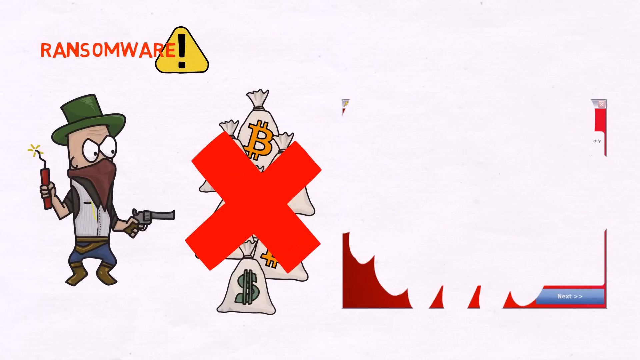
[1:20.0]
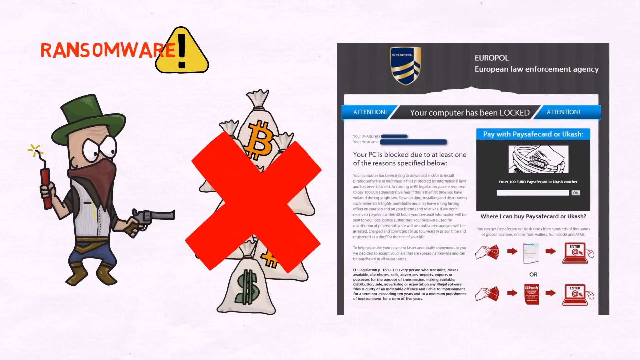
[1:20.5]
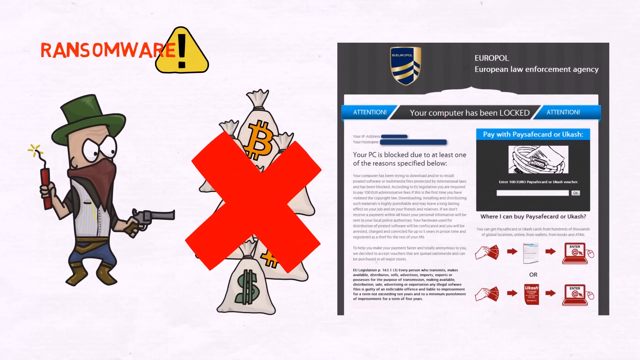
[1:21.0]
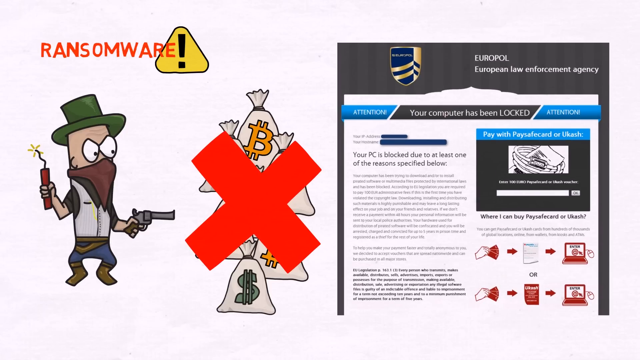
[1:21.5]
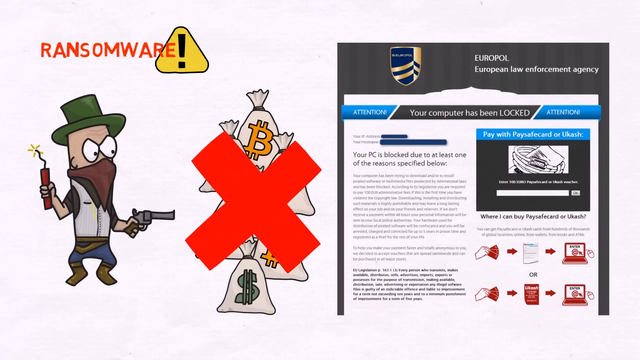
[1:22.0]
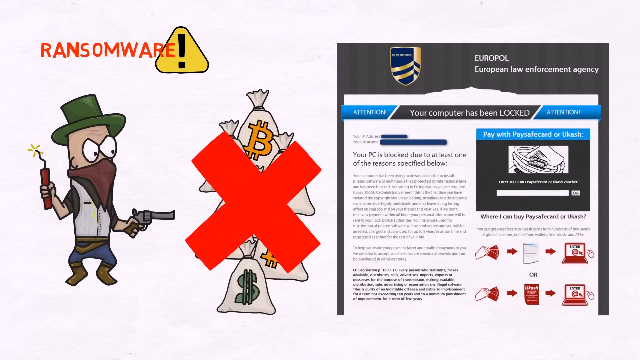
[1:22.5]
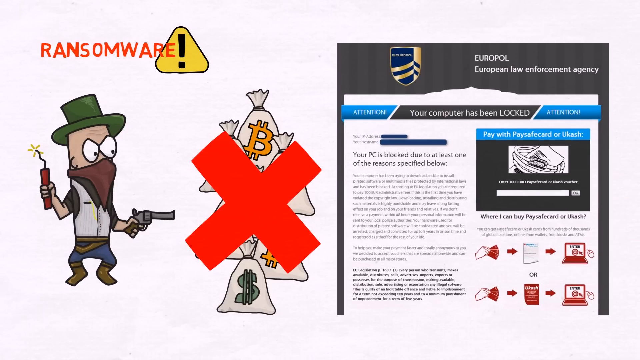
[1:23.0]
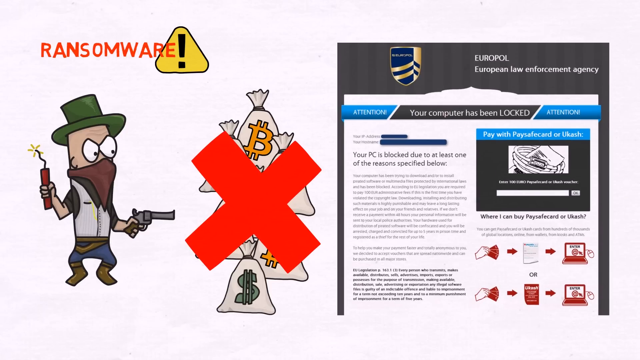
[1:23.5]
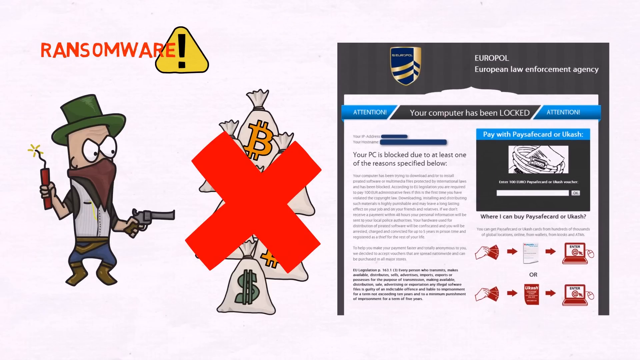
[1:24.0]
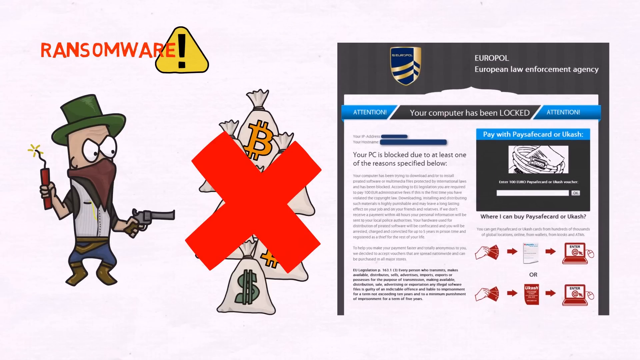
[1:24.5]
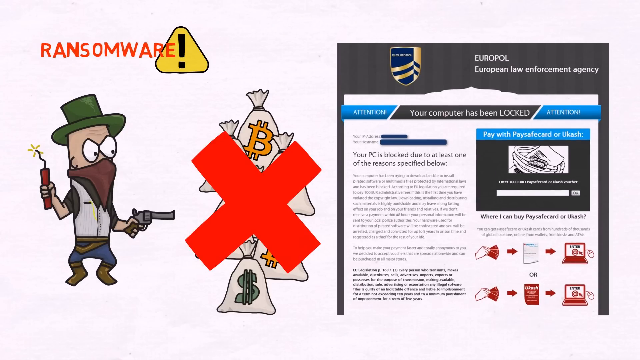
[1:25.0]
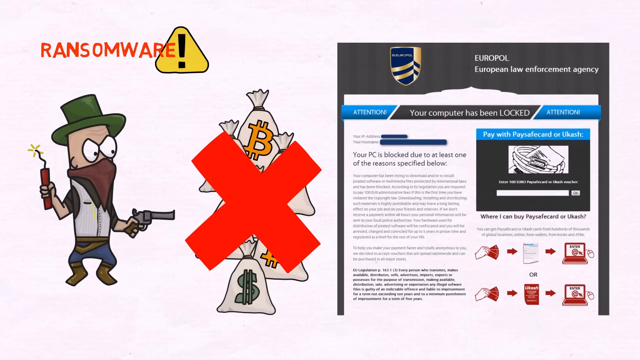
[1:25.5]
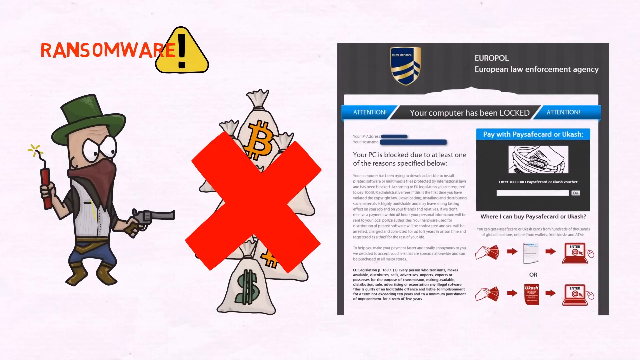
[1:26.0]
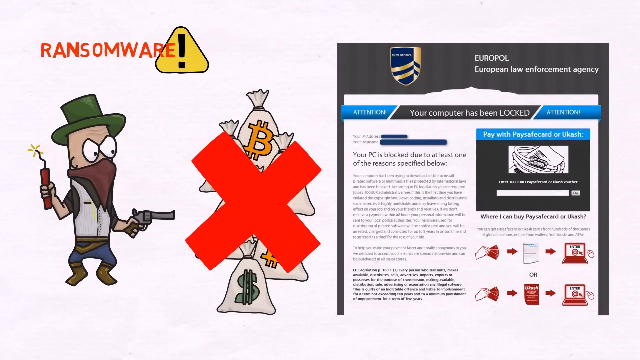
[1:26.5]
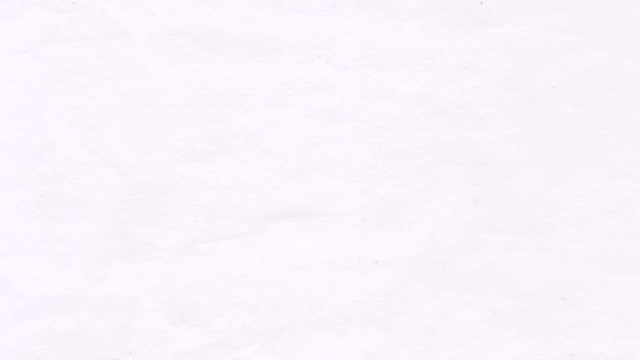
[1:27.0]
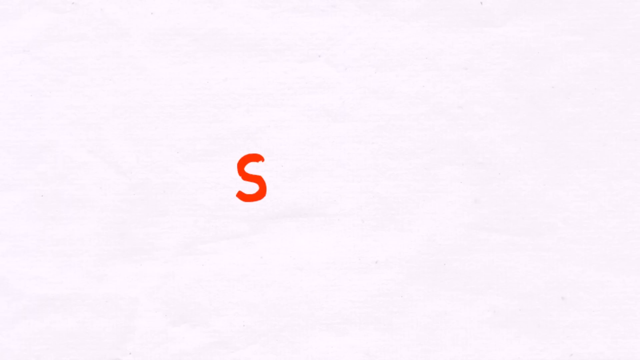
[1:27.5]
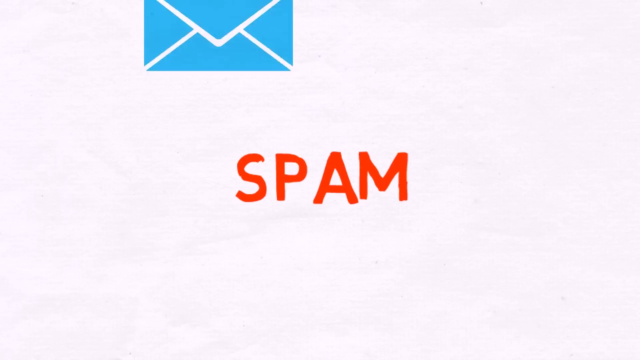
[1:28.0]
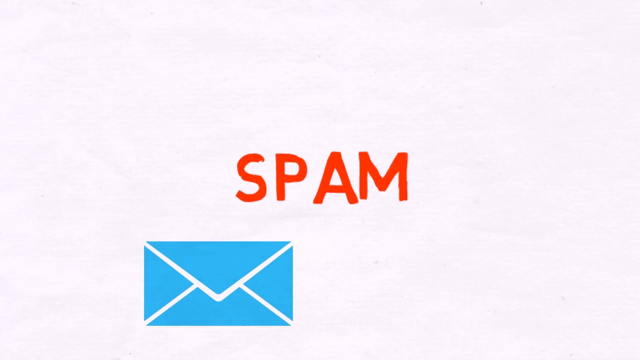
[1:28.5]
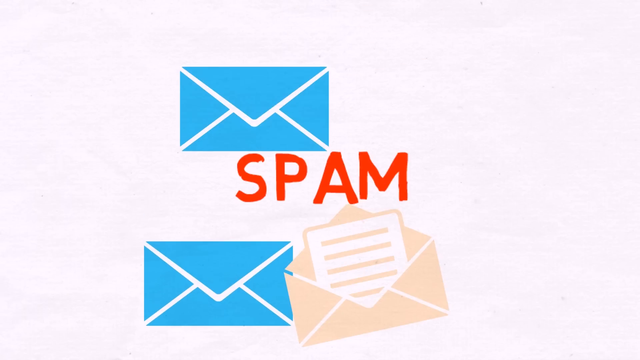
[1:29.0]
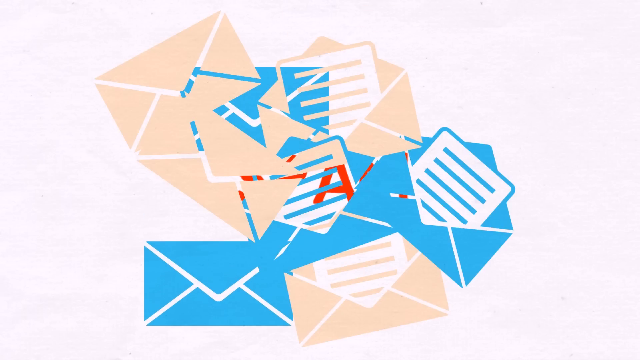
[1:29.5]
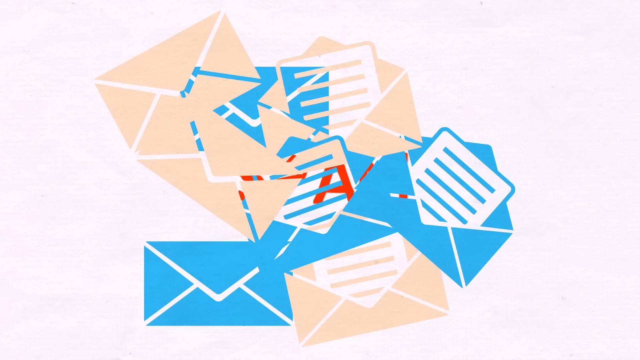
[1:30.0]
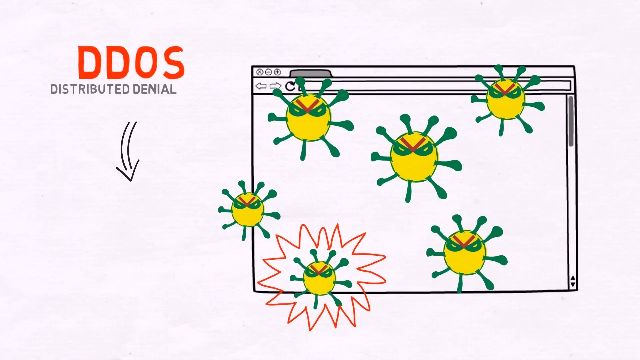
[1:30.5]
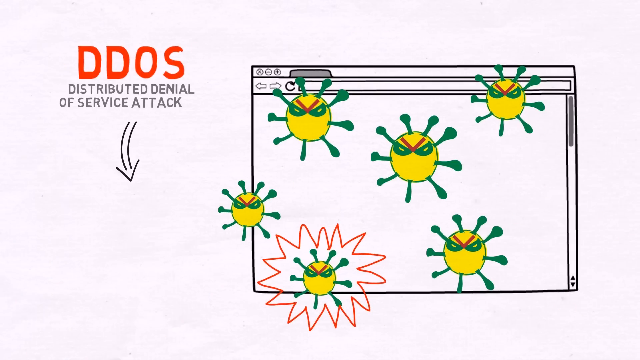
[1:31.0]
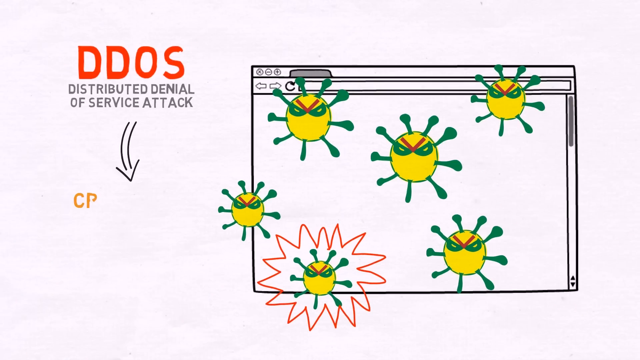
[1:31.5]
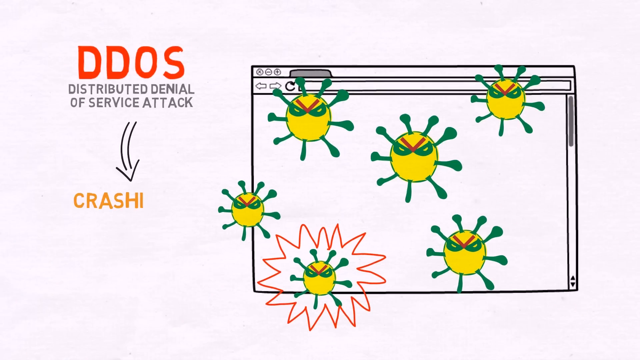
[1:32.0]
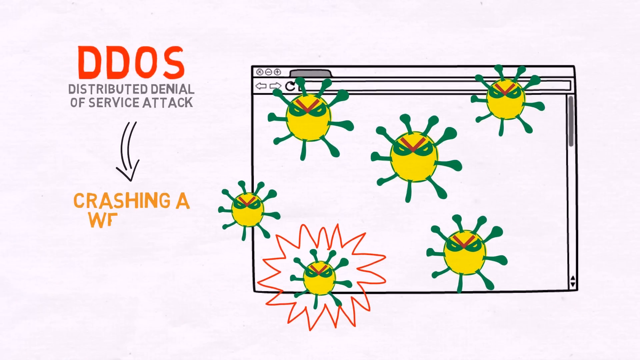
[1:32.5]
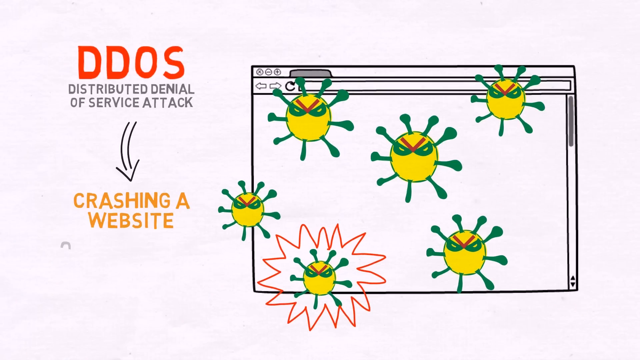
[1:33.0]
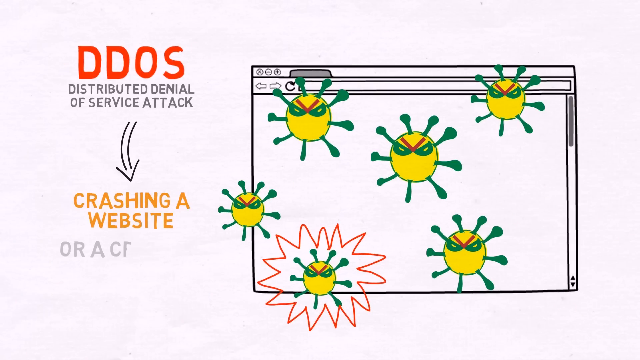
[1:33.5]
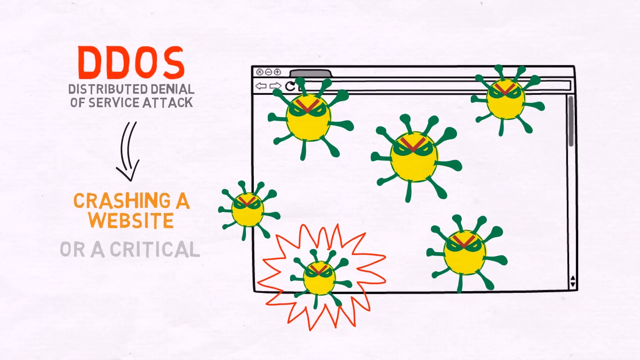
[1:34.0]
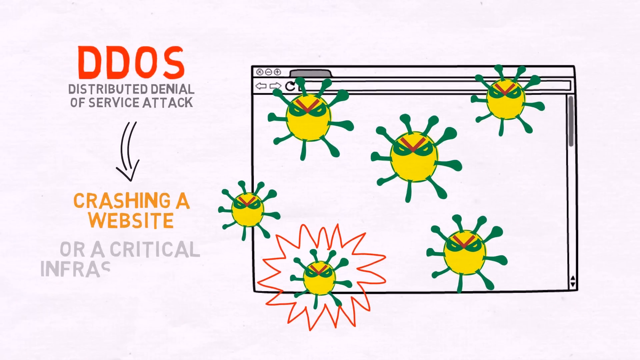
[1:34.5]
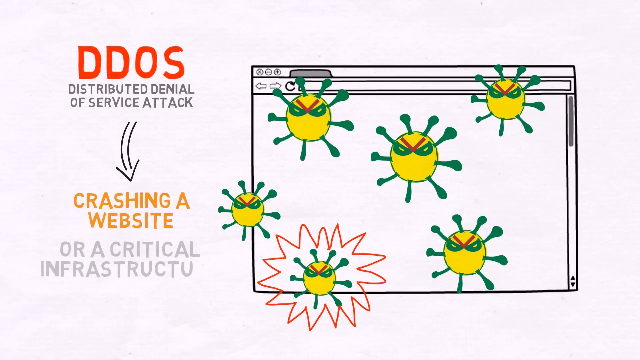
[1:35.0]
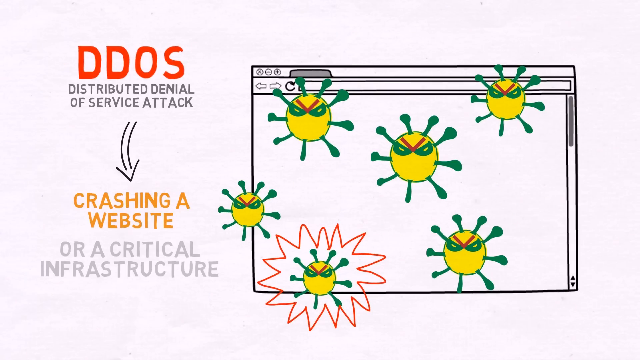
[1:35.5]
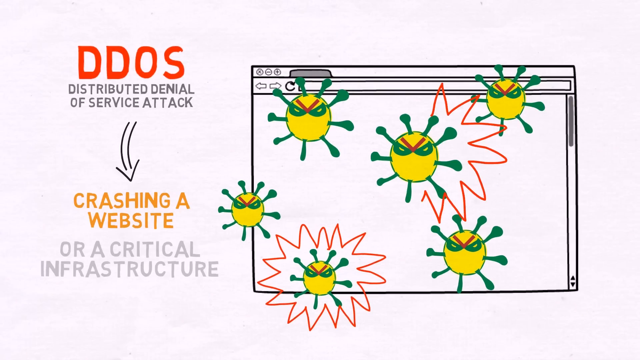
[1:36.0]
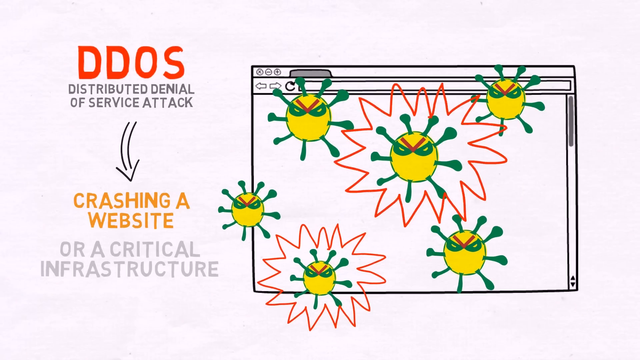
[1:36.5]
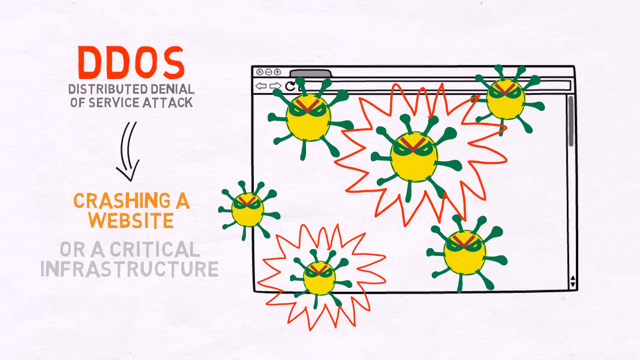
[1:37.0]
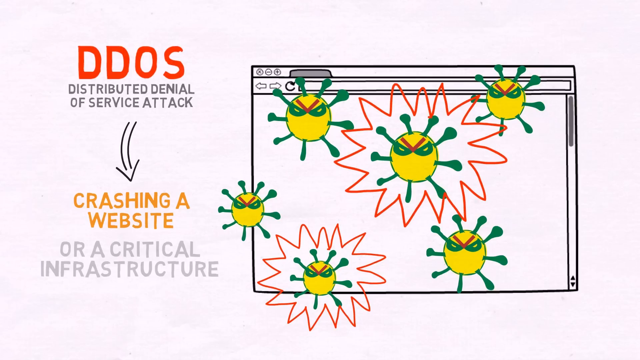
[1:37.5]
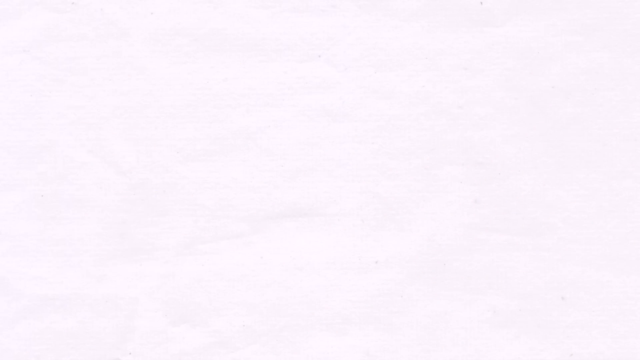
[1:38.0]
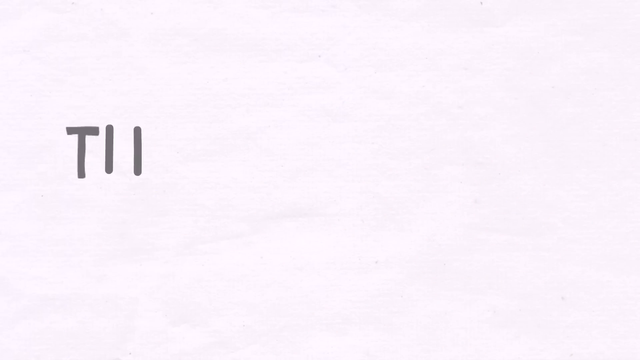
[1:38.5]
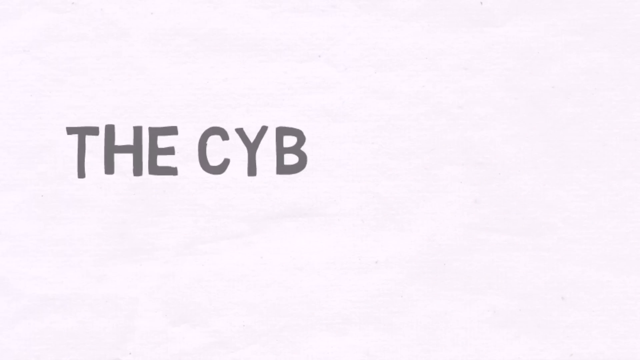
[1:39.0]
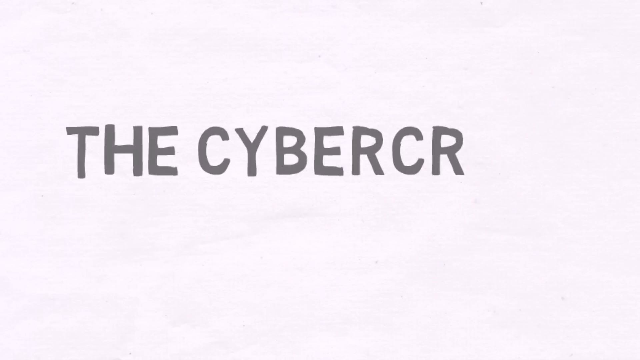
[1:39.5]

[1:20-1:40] The "ransomware" text retreats to the top left corner of the screen. Below it is a cartoon man in a green hat, presumably a cowboy hat, with a handkerchief-type covering over the bottom of his face. His eyes are wide and basic, white with a black border and a tiny point for the pupil. He holds a stick of dynamite in his right hand and a pistol in his left. He wears a grey waistcoat, or vest, over a darker short-sleeved shirt, a belt, blue pants and brown boots. Cartoon bags of money then appear, tied at the top, with either dollar or Bitcoin signs on the front, and a red X across them. On the right-hand side of the screen a page drops in with a black border at the top reading "Europol" from about halfway across, and below that "European Law Enforcement Agency". Beneath is a horizontal bar: blue at the start reading "attention", black in the middle reading "your computer has been locked", and another section at the other end reading "attention".